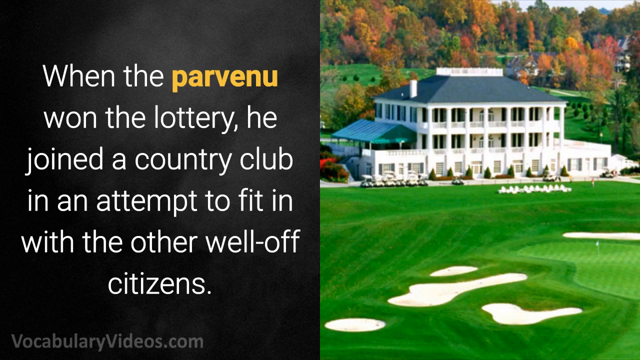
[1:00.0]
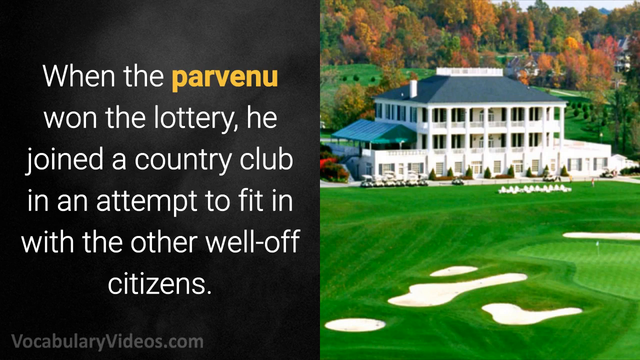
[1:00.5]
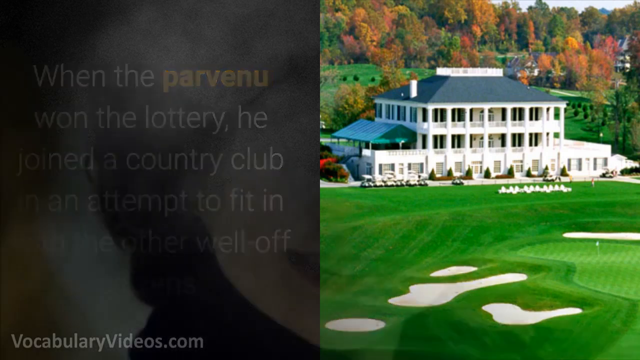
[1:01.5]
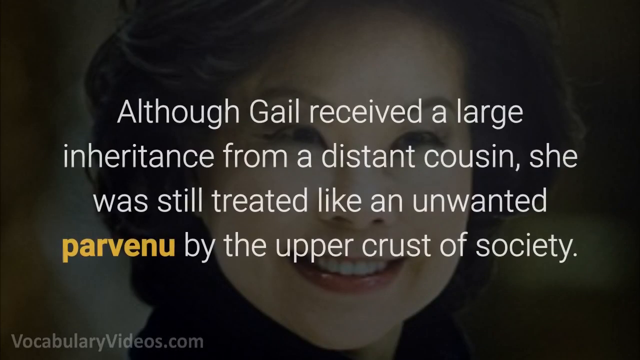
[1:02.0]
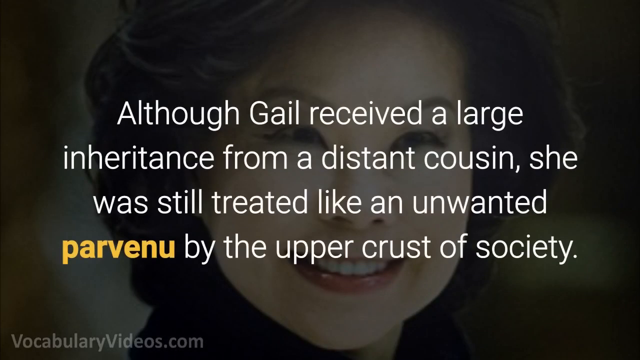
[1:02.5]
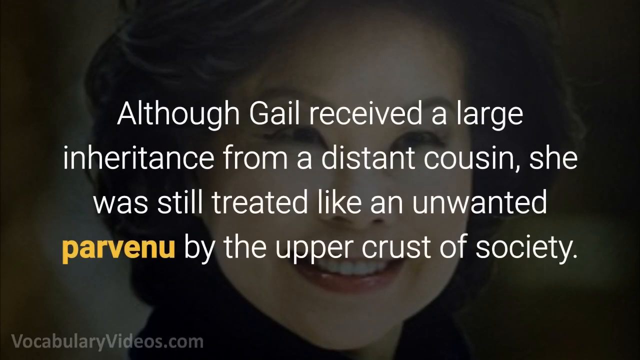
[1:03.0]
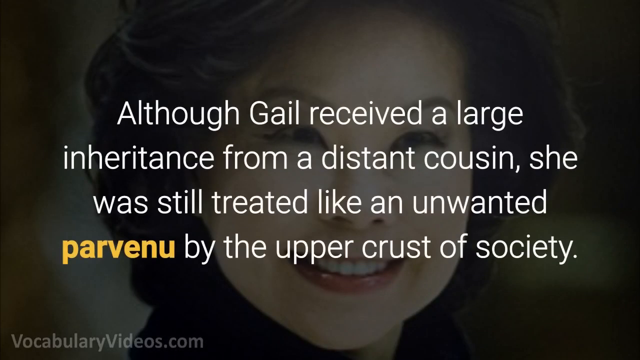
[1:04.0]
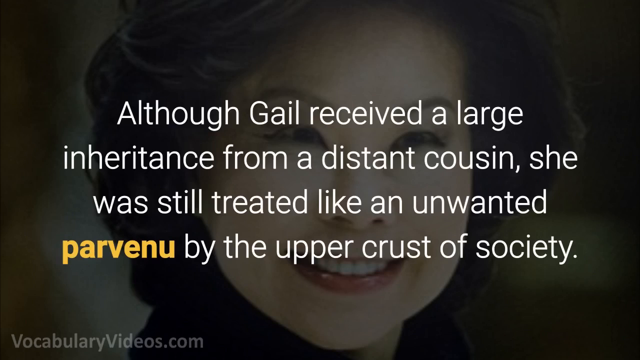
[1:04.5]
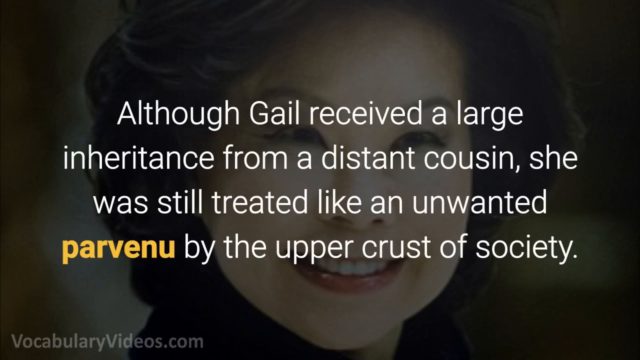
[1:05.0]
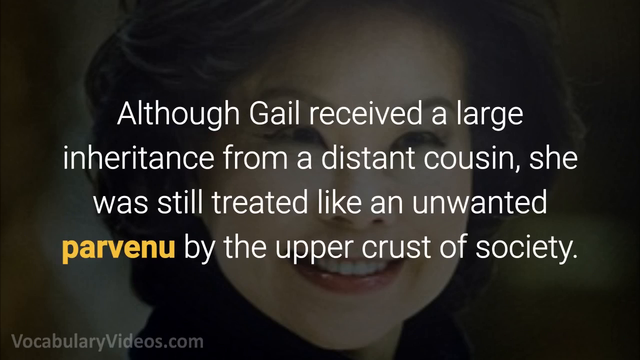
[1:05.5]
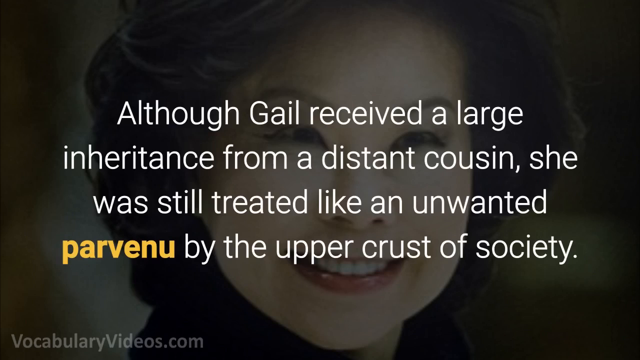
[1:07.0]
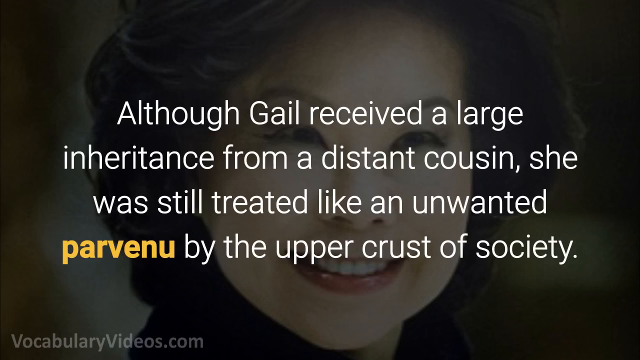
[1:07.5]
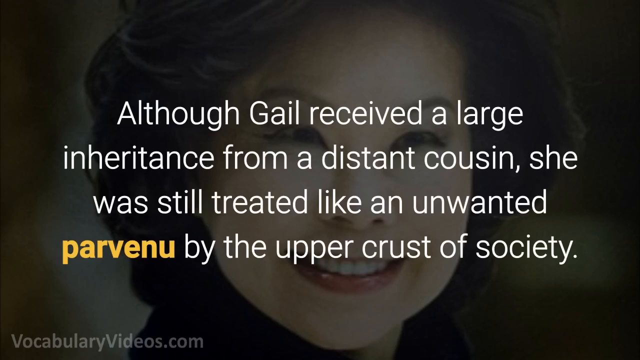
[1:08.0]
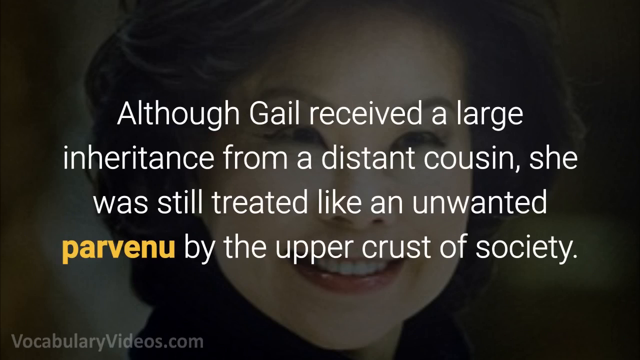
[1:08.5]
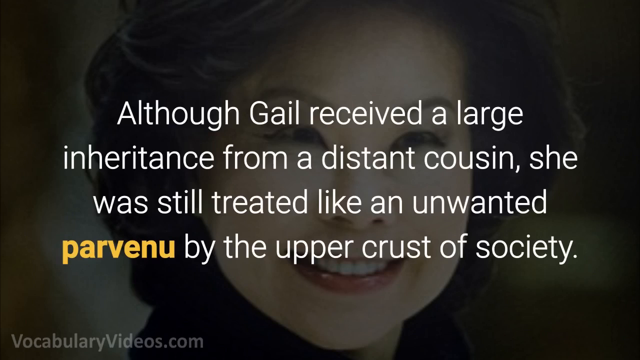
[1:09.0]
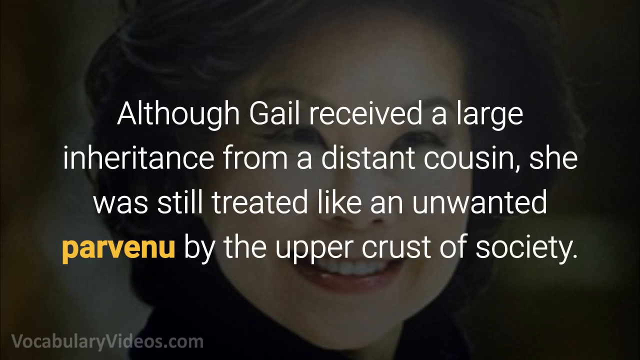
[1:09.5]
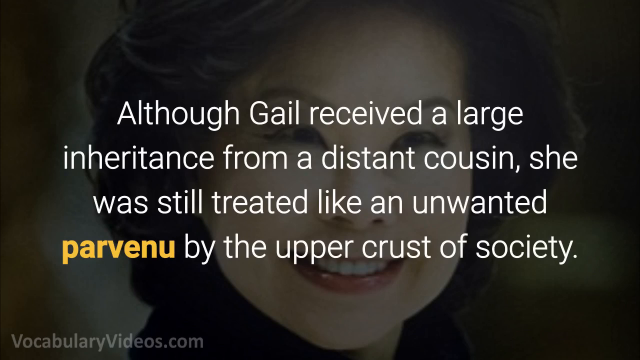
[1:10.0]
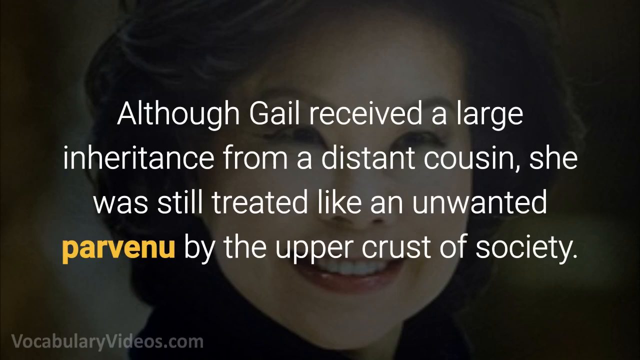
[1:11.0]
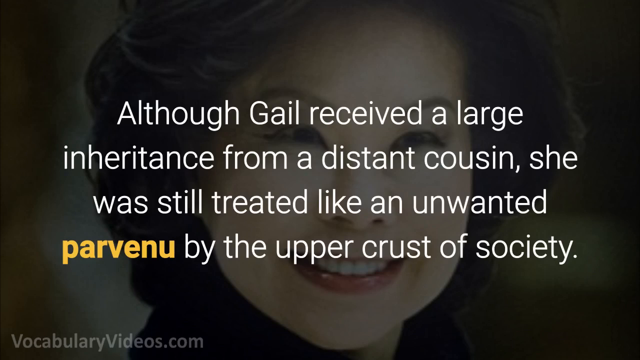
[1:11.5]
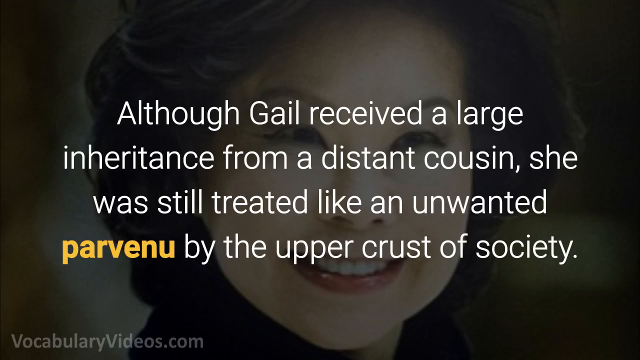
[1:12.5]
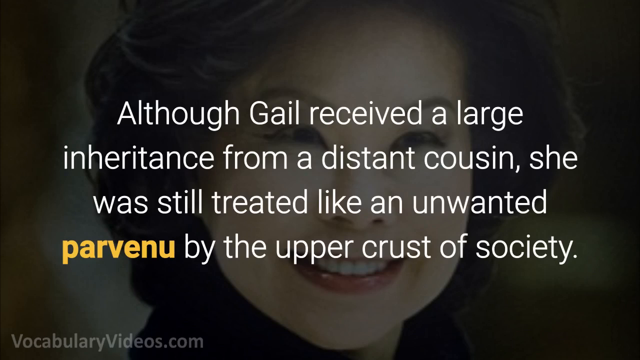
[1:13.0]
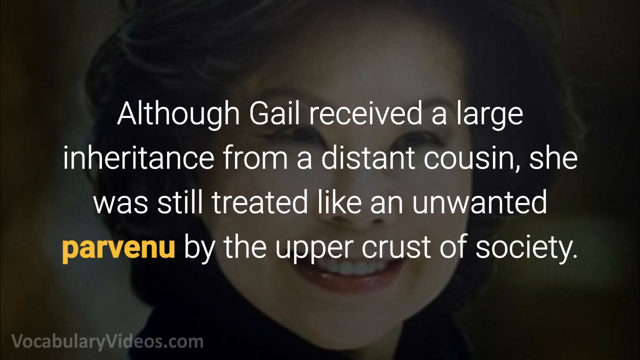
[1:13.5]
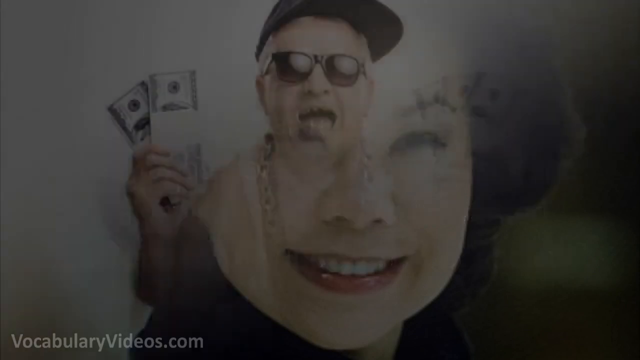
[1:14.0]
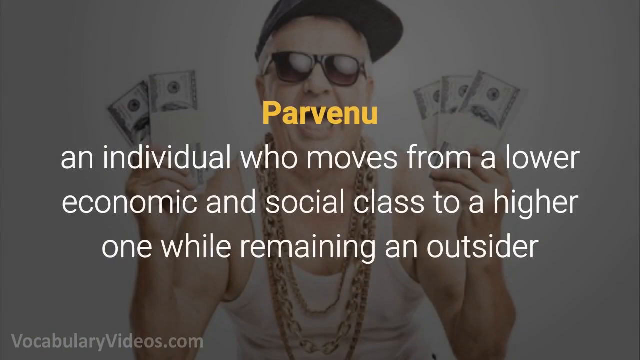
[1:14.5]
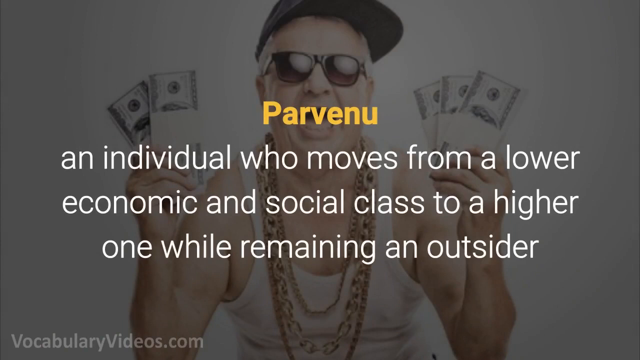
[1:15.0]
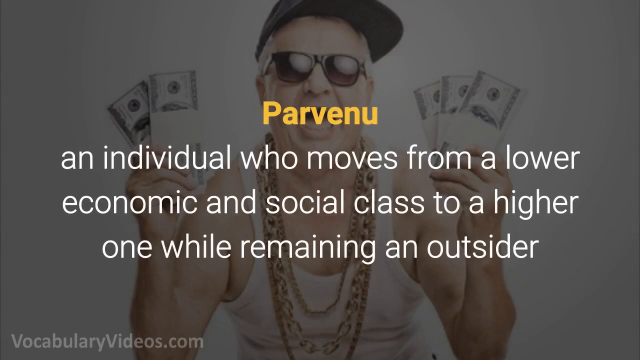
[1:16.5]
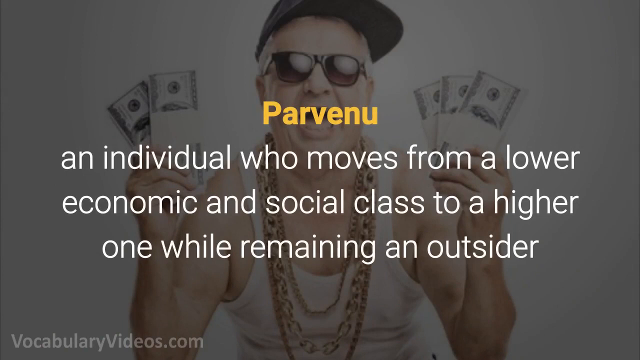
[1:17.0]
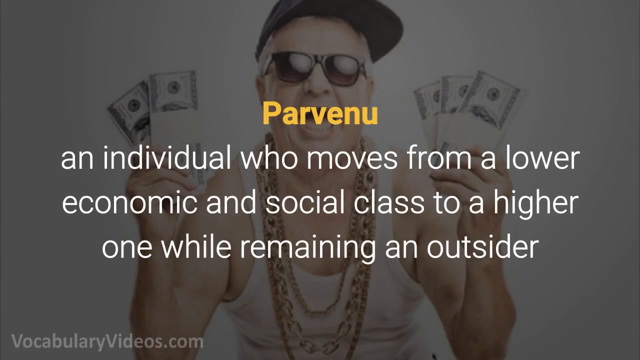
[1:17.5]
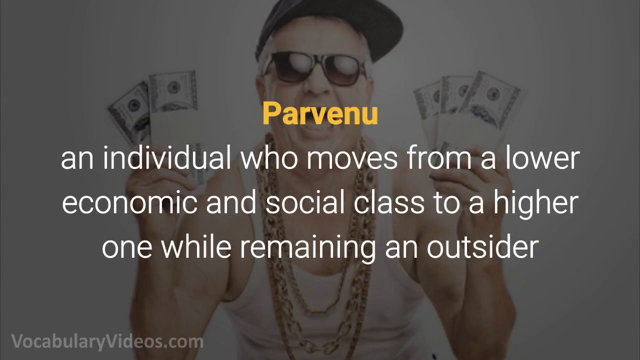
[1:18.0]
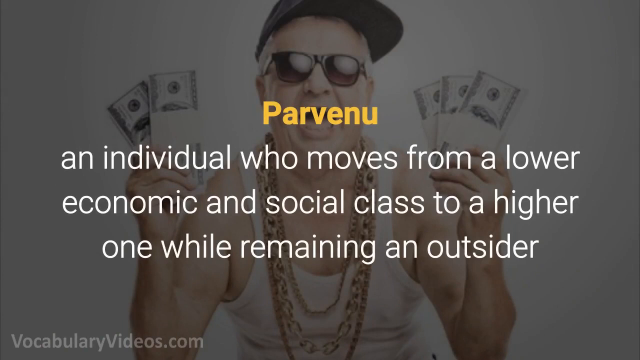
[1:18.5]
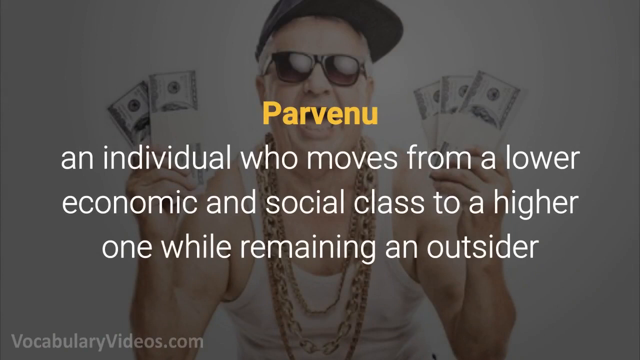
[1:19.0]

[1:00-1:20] The tutorial again gives the spelling P-A-R-V-E-N-U and the definition of a parvenu as an individual who moves from a lower economic and social class to a higher one, crucially while remaining an outsider. A new example follows: although Gail received a large inheritance from a distant cousin, she was still treated like an unwanted parvenu by the upper crust of society.